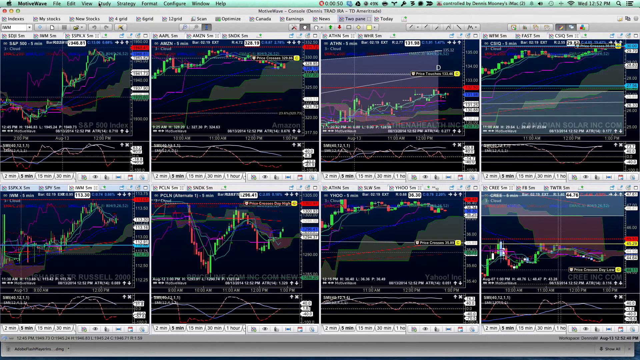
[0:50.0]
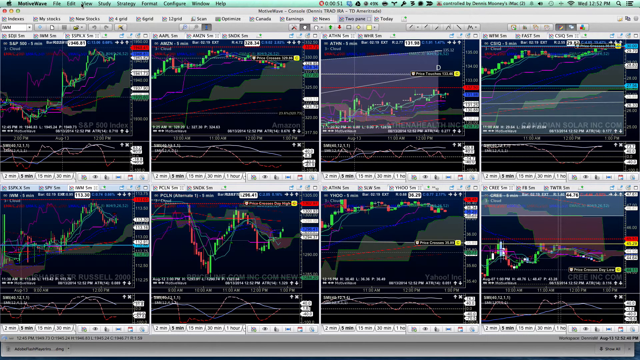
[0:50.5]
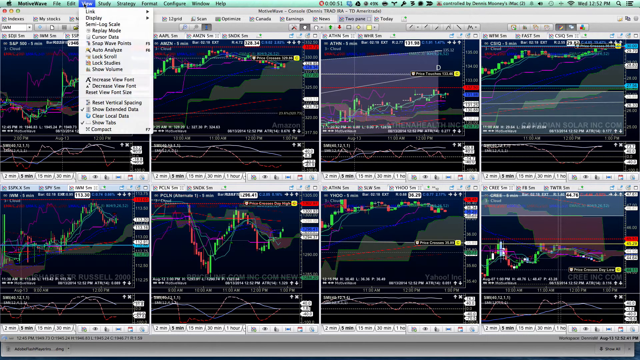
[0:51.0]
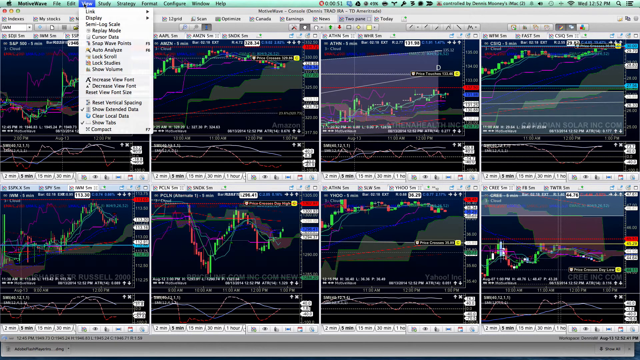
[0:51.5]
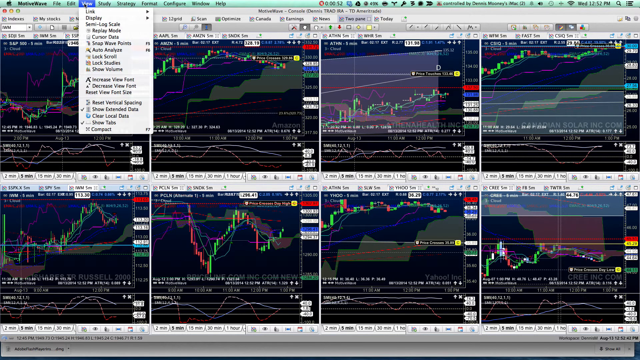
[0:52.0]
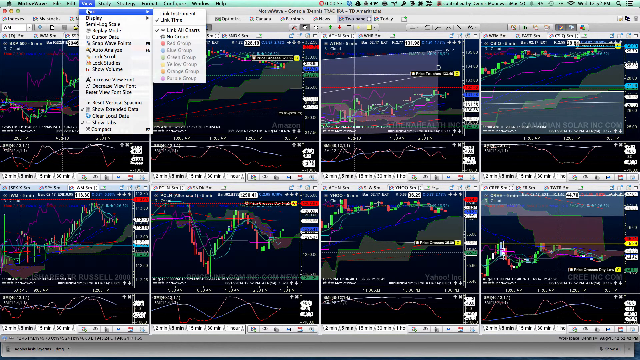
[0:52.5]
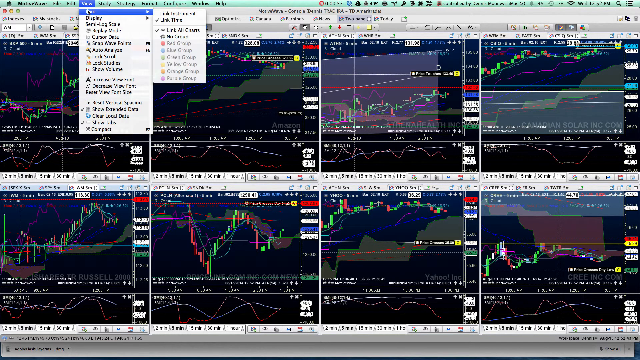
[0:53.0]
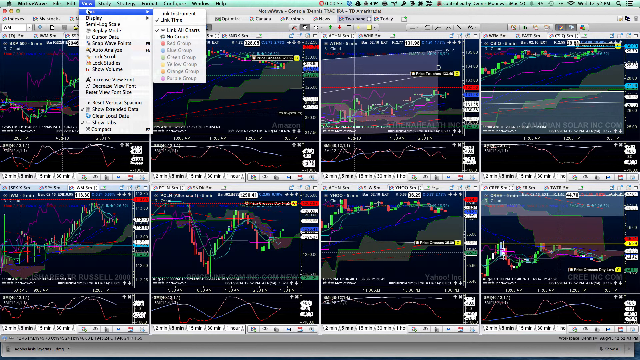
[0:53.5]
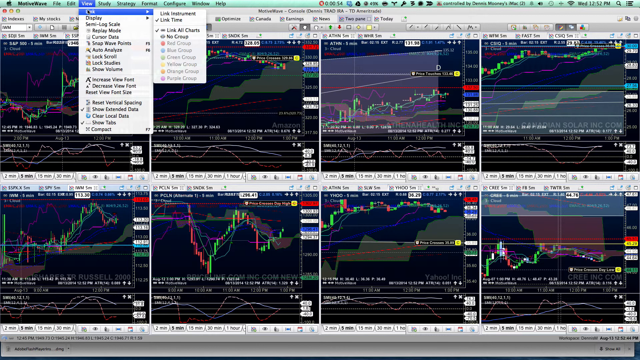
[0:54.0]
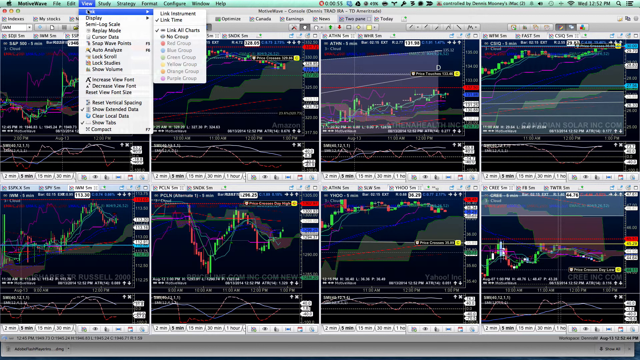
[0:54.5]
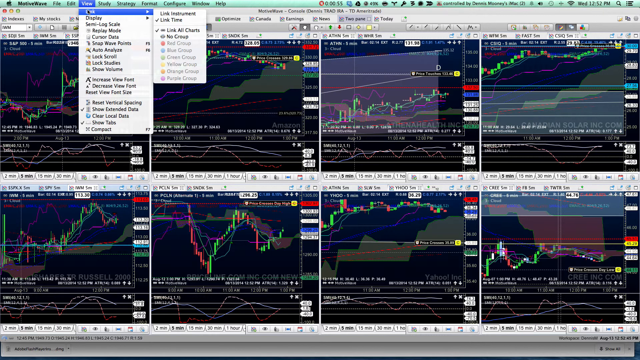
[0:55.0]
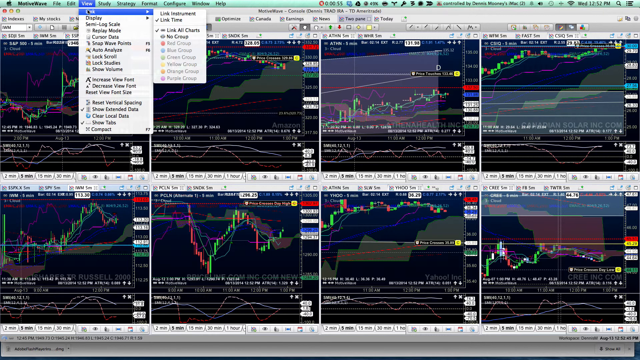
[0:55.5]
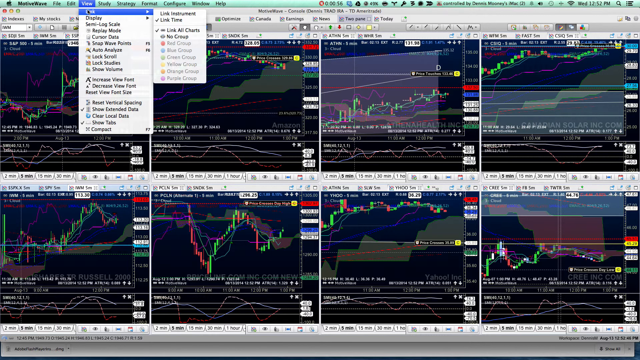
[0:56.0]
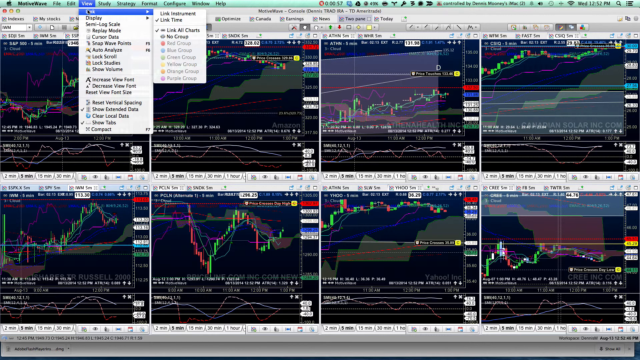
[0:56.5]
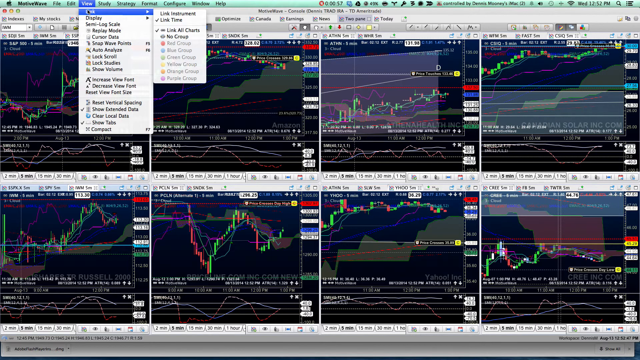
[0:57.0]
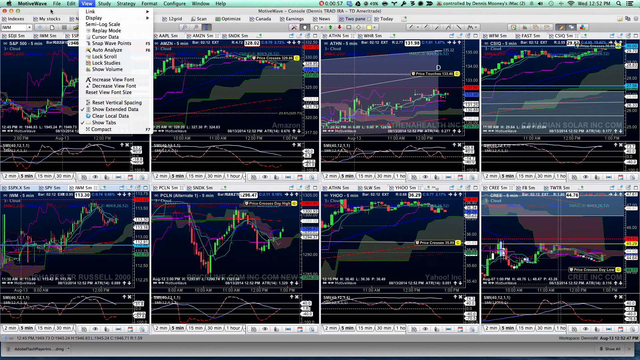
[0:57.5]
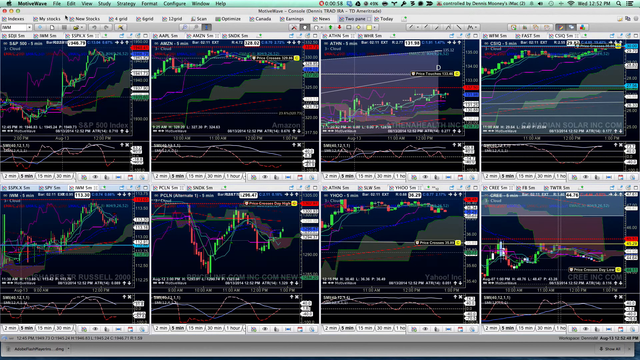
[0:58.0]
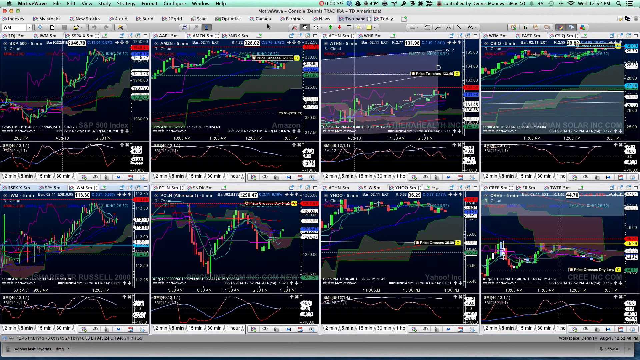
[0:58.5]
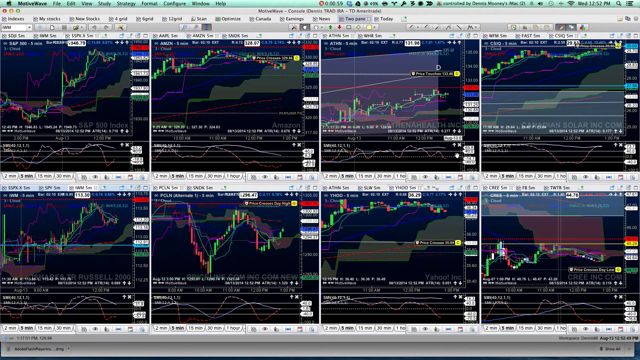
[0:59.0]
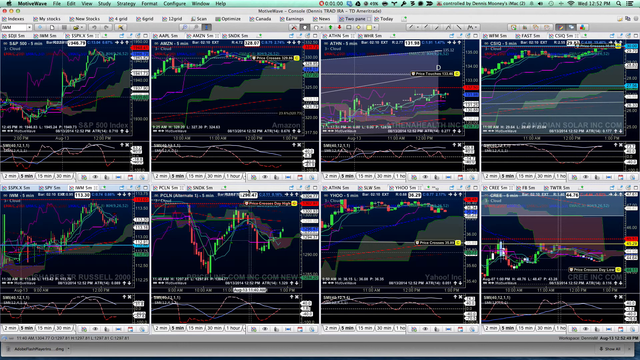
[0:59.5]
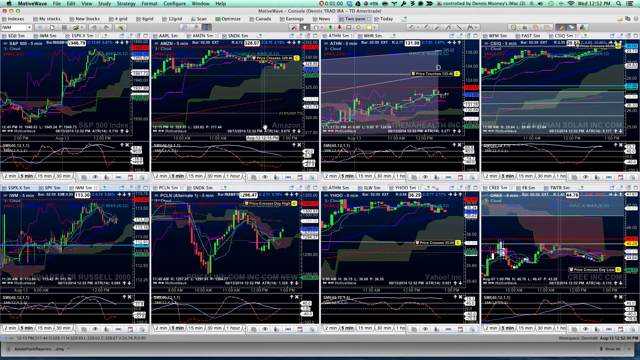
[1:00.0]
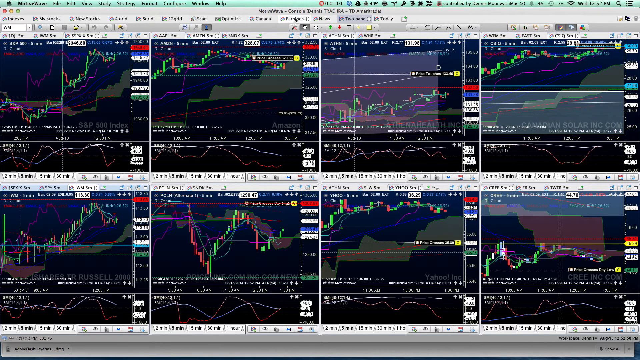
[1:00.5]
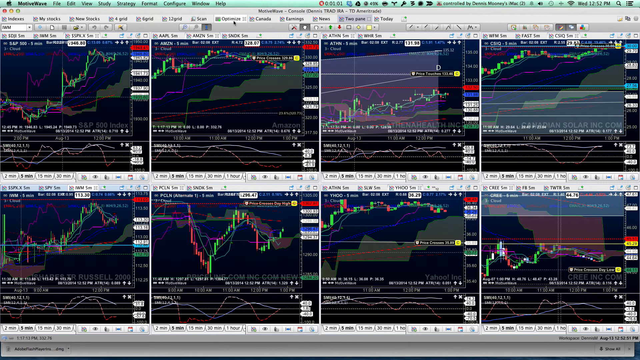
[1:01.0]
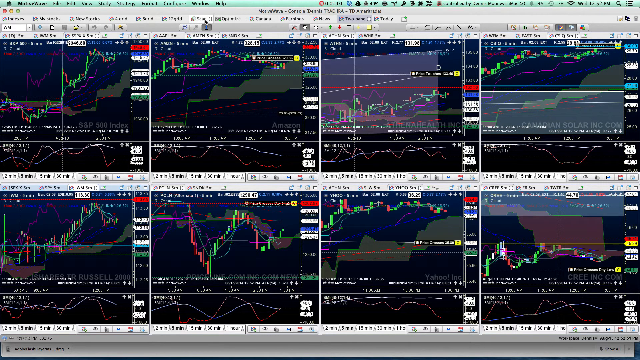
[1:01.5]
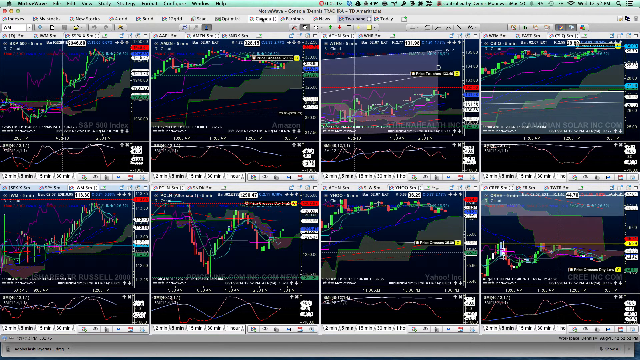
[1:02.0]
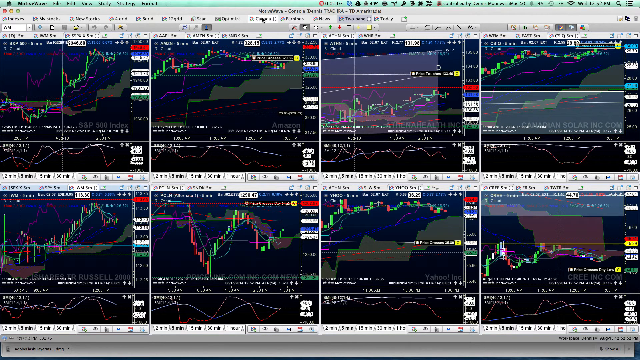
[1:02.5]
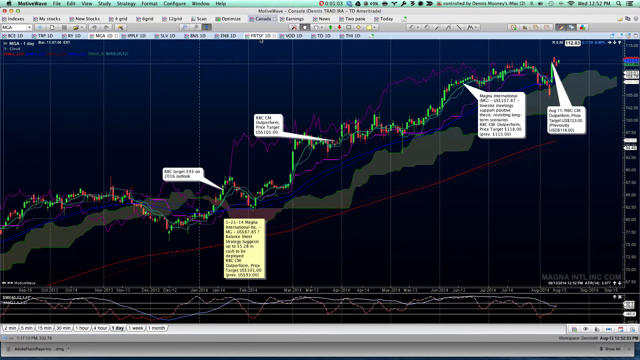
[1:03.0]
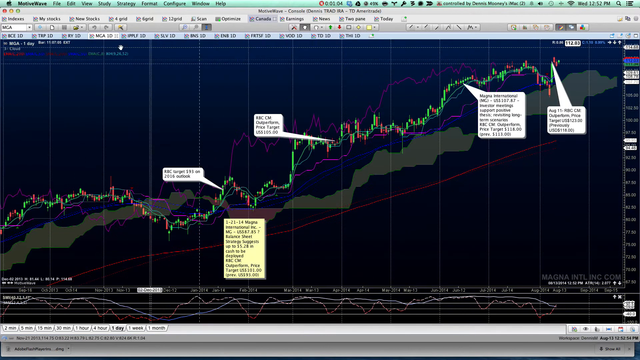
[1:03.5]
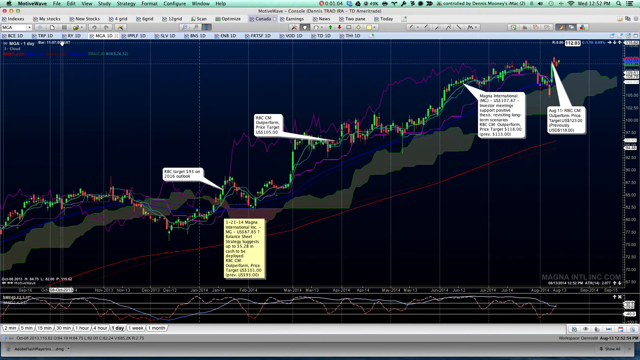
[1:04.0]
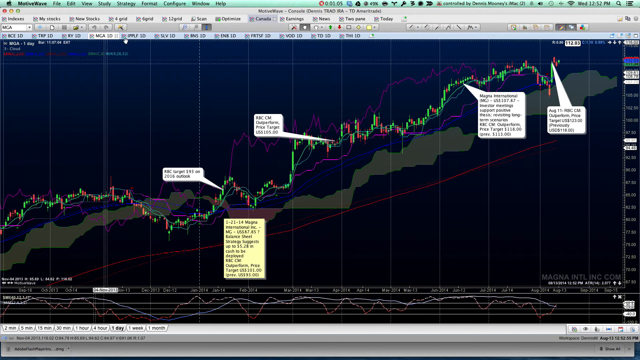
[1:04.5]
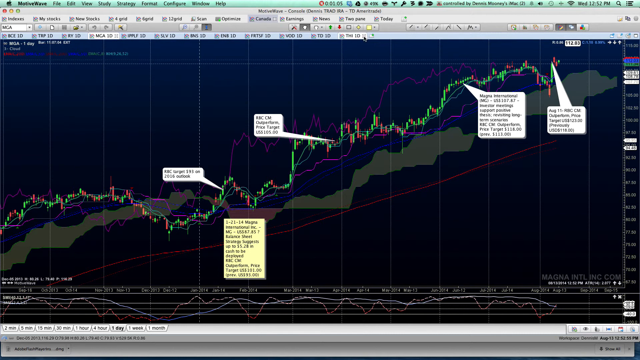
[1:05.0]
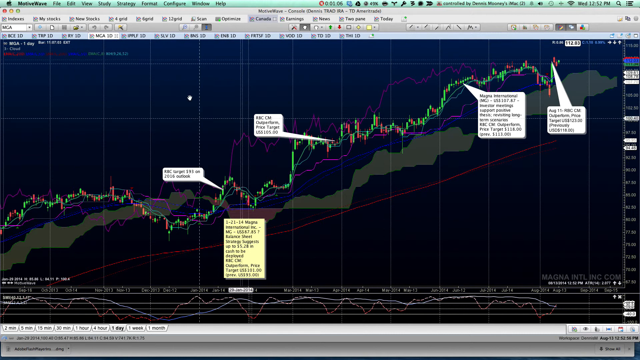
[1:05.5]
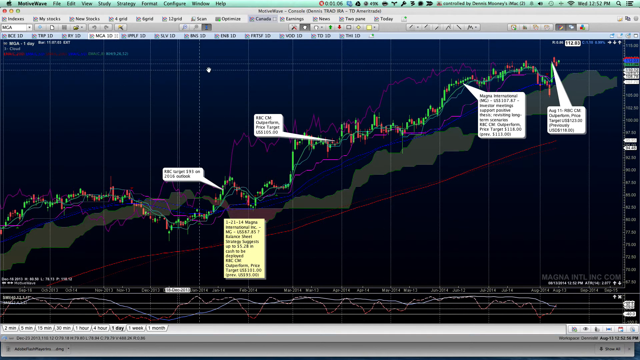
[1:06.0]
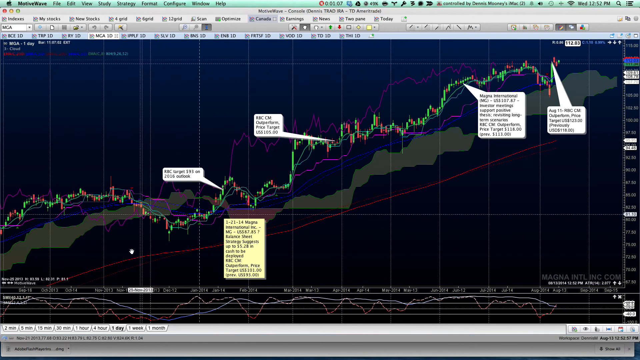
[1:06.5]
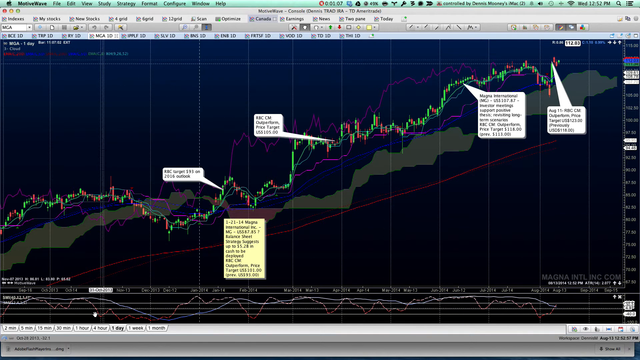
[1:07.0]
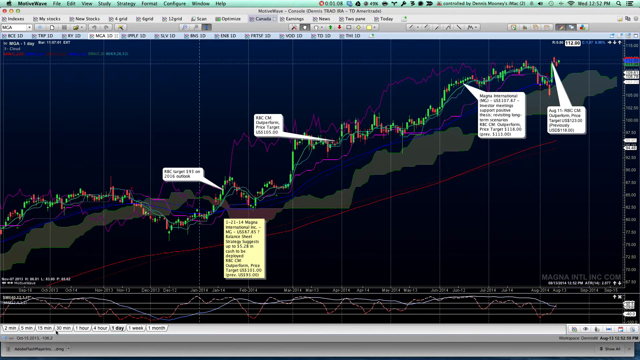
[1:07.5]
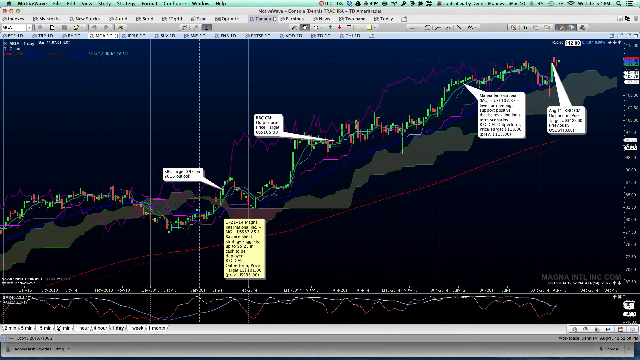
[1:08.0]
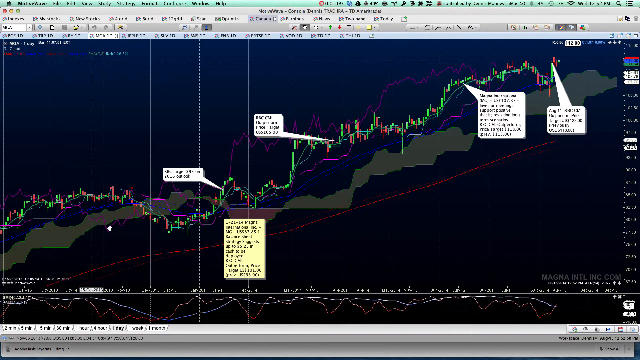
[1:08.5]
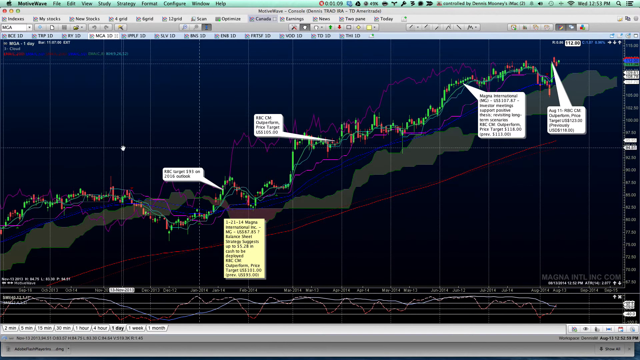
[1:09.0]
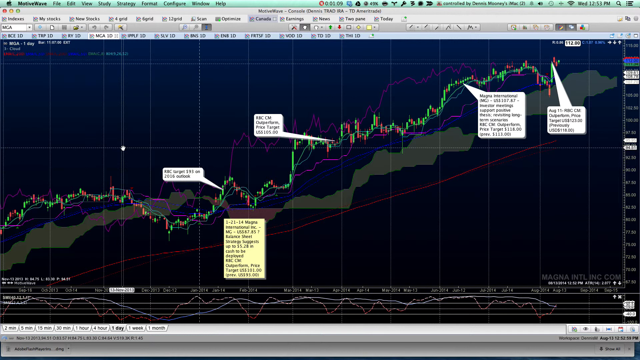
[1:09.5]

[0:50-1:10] The user clicks on the view at the very top of the graphs and goes down to the first option, called "Link", which has an arrow pointing right that pops out a variety of options. The user does not scroll to or click on any of them. After moving the mouse around, the user clicks a button that seems to be a candle; it is quite blurry, but it starts with the letter C. A single candle chart appears, seemingly for BCE stock, though it is too blurry to say for sure. A couple of points are already labeled on it. Overall, the chart climbs upward: it climbs about a fourth of the way, starts decreasing, climbs back up, and has a small dip again. Through the middle half it moves up and down only a little, in very close, small waves, then keeps increasing with small decreases every so often. At the very end it makes a big decrease, then spikes up sharply to reach a new high. The user moves the mouse around, hovers on the left side, then clicks on part of the chart at the left end, and a loading button appears.